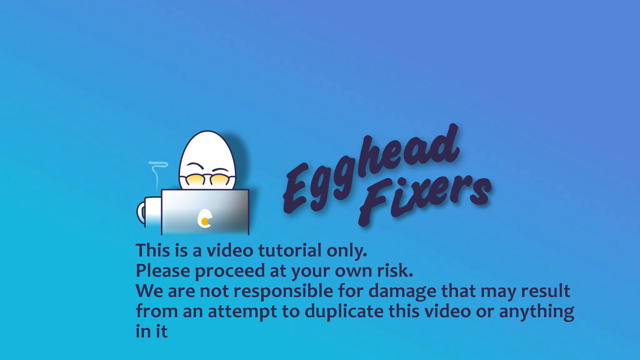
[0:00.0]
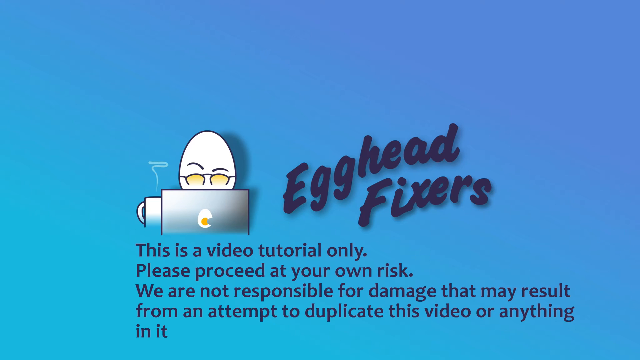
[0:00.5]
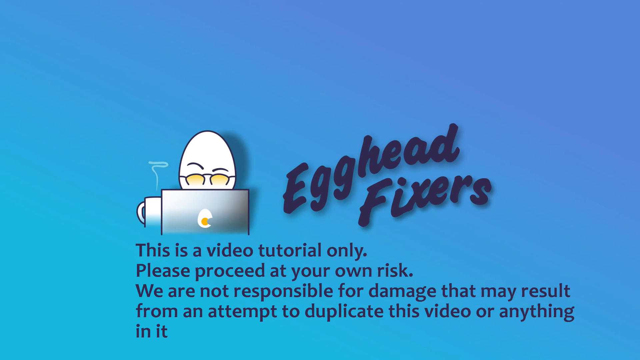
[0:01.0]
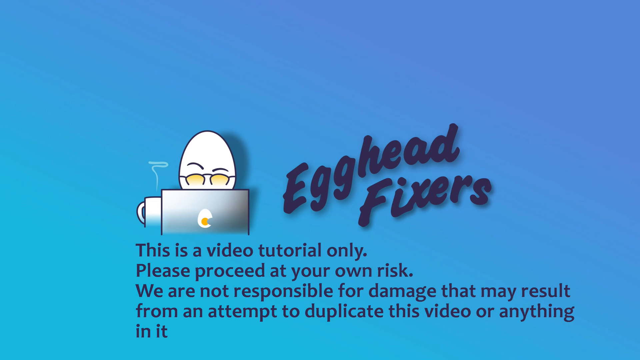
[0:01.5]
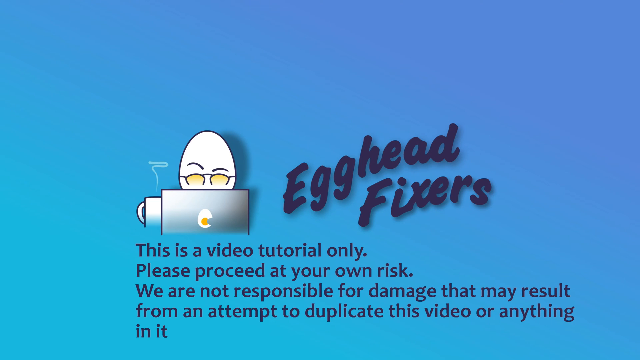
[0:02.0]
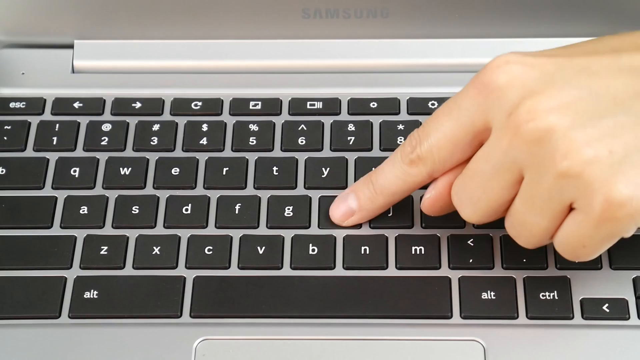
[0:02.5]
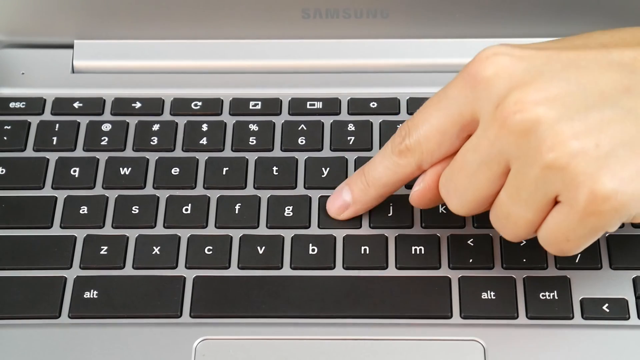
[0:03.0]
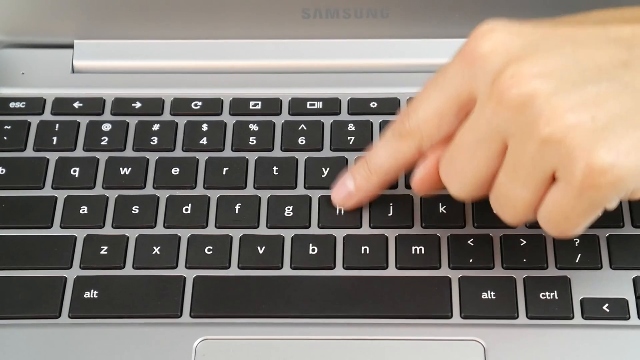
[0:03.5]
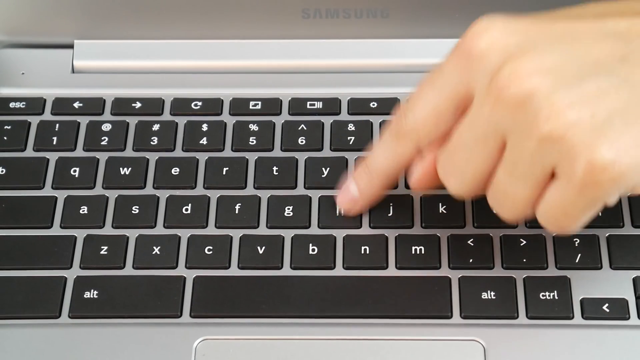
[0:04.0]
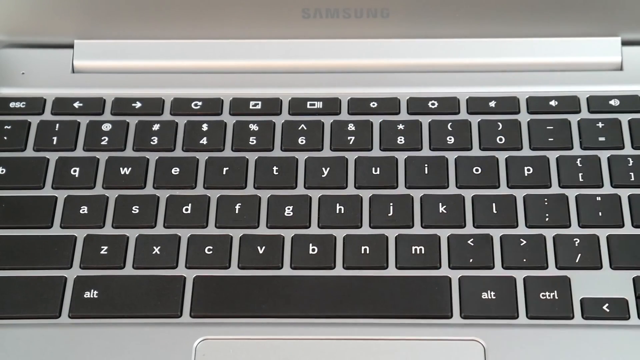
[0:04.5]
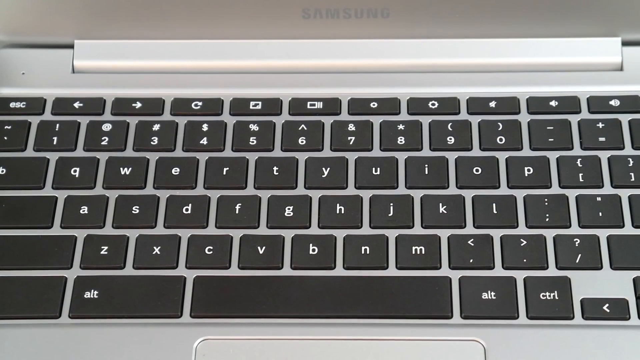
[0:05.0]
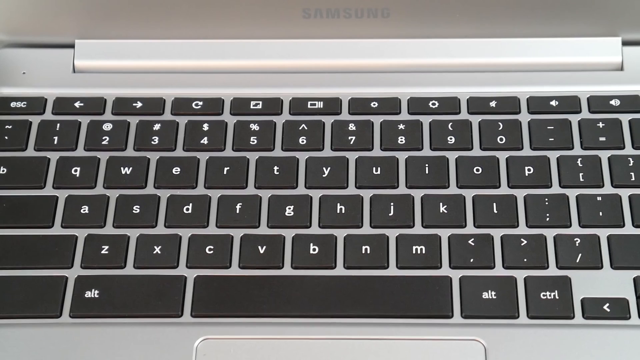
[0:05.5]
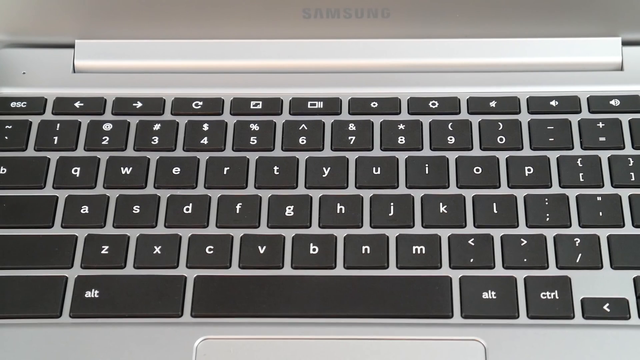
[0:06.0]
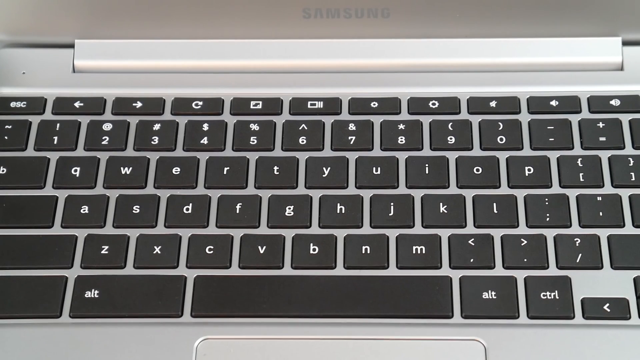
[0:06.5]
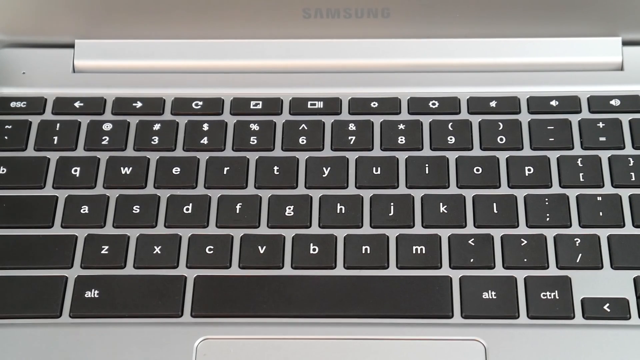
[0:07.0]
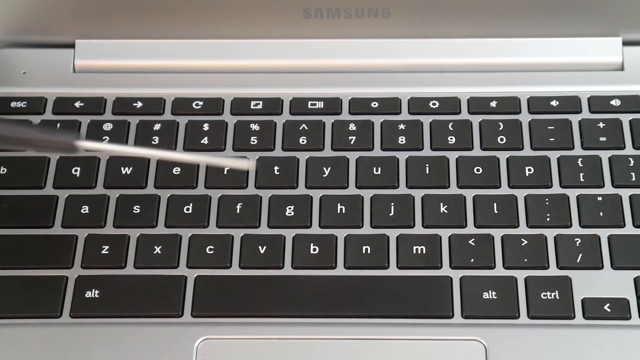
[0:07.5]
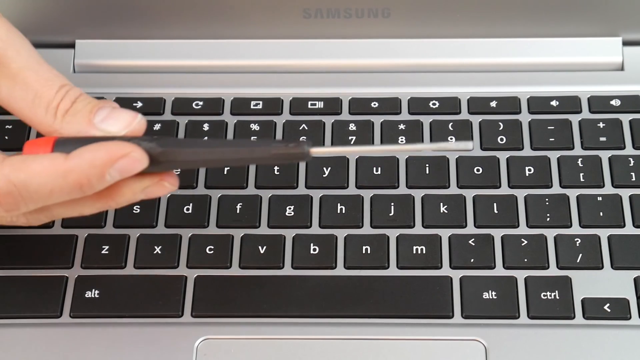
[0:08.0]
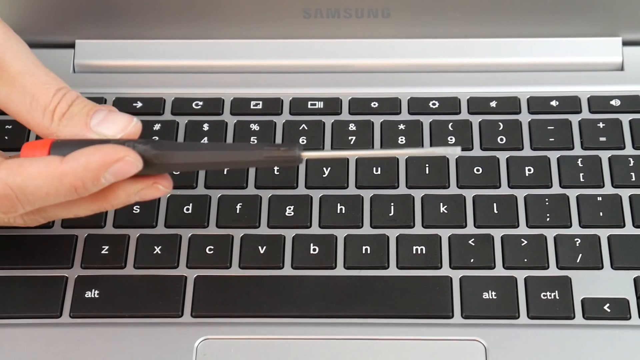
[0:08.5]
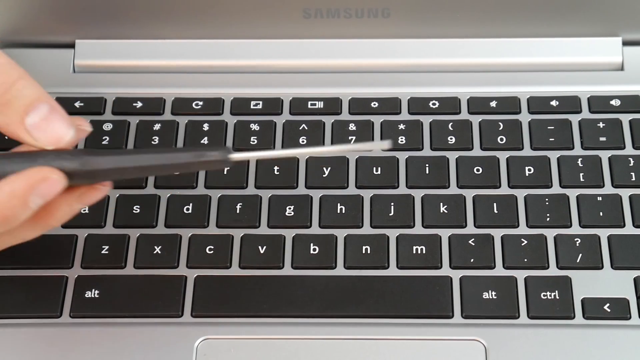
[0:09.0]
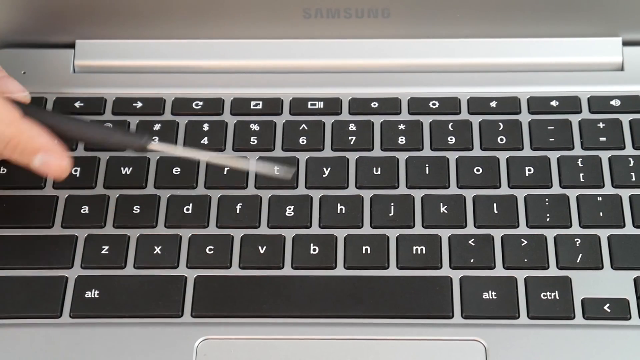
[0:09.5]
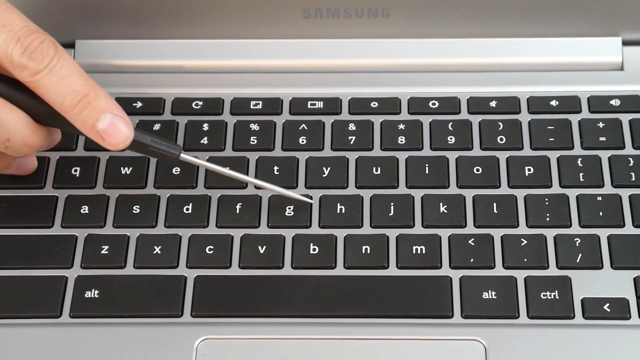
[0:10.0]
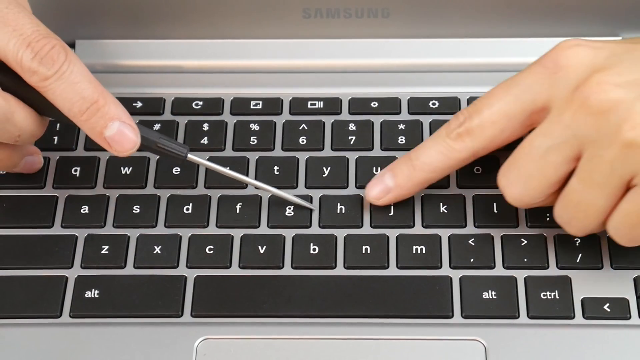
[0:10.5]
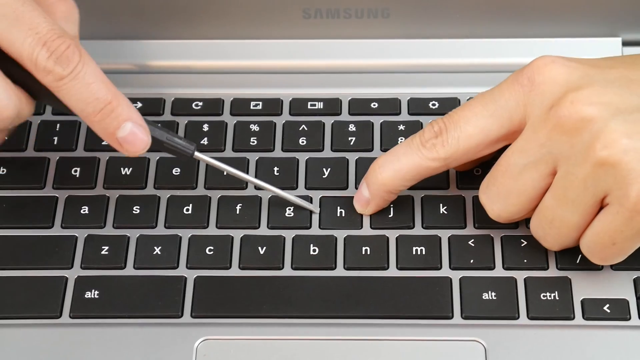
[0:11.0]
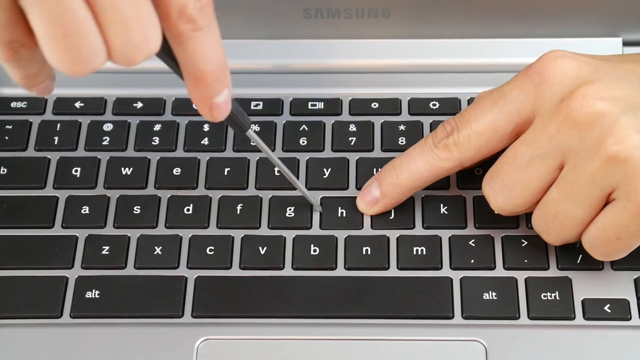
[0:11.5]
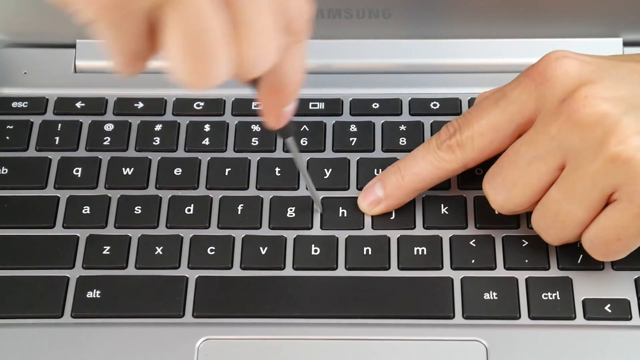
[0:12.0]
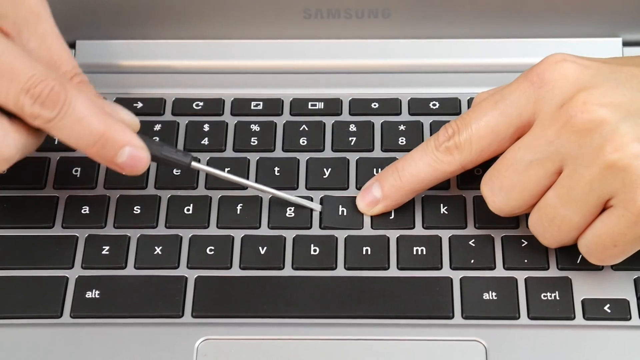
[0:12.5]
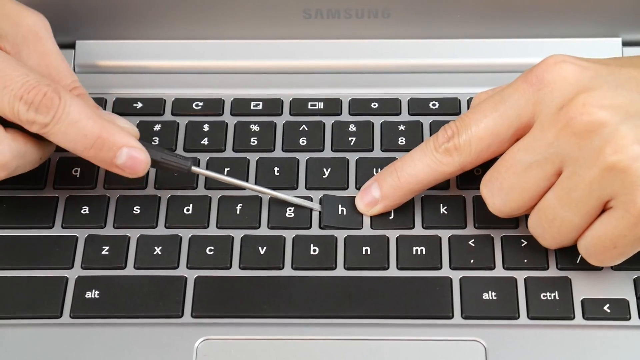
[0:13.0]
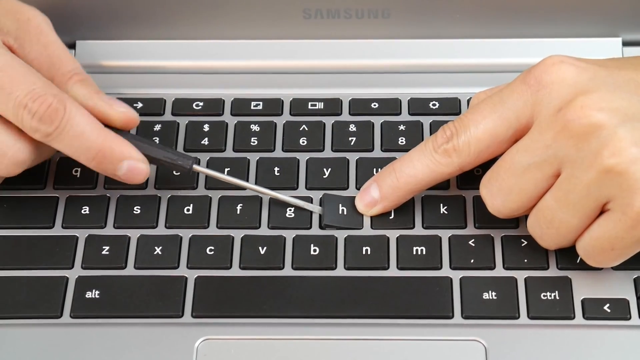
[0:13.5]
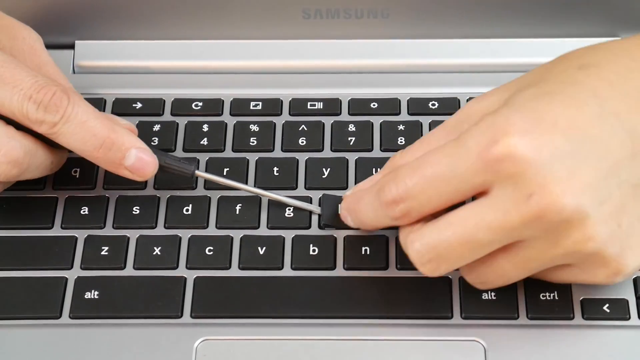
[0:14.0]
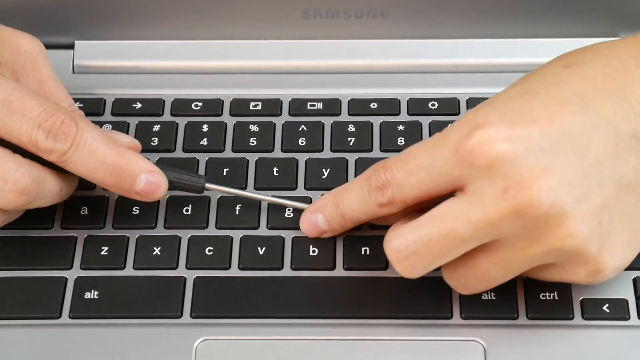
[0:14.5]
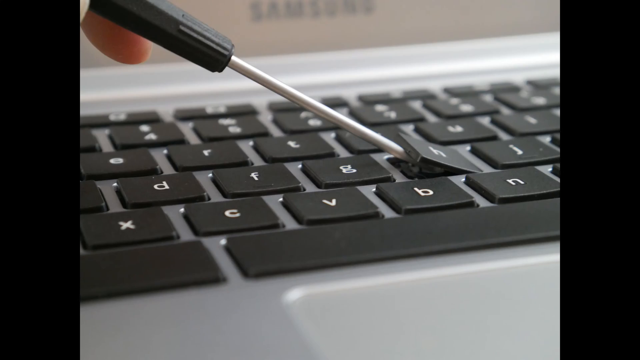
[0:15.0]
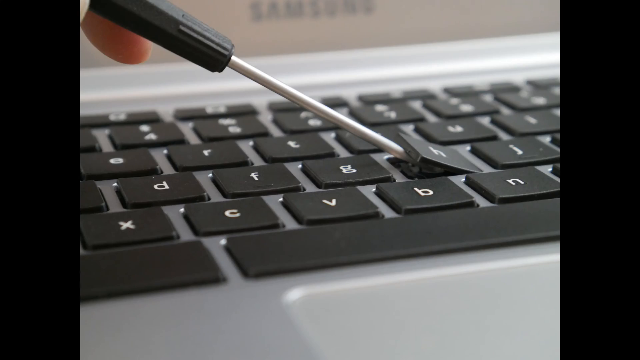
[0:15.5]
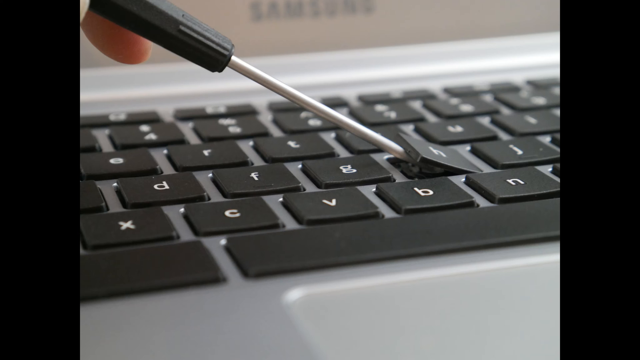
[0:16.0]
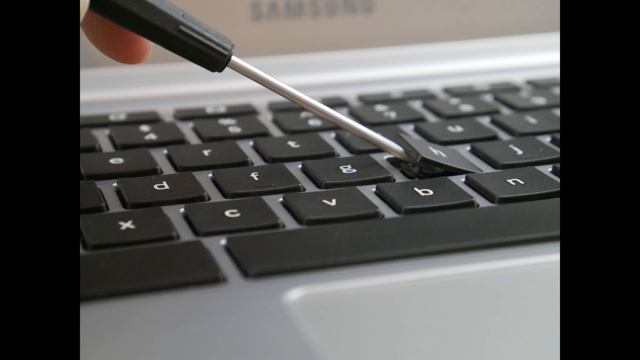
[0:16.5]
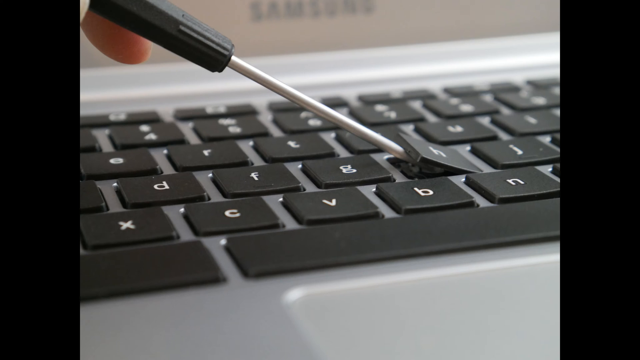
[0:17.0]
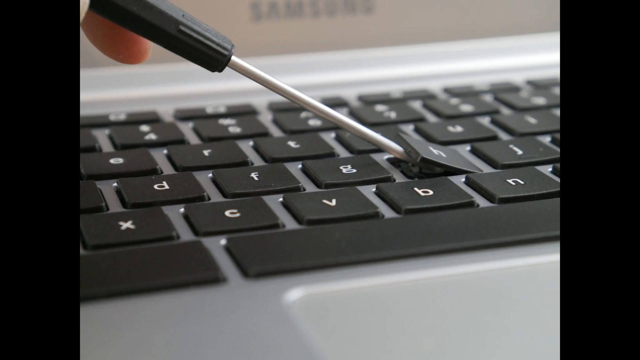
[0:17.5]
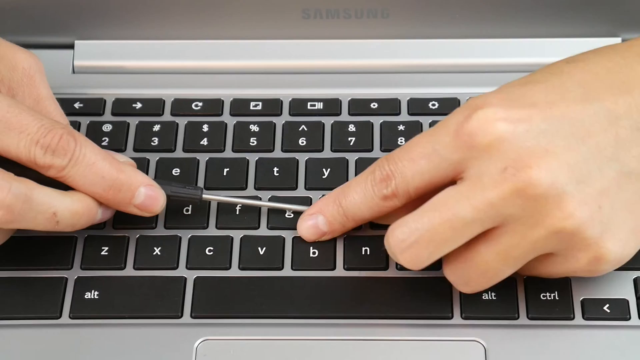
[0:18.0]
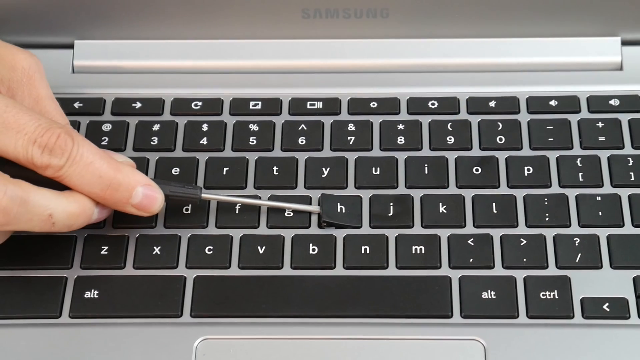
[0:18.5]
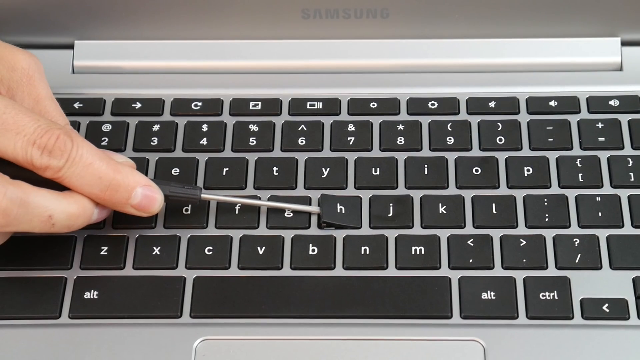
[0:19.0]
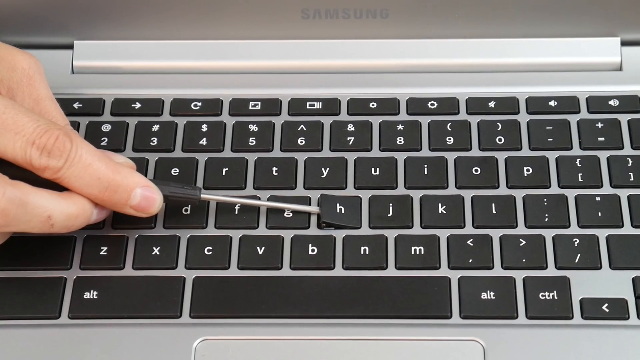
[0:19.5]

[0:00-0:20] The video opens on a light blue background with dark blue text in the center reading "egghead fixers." To the left is a little cartoon-style egg wearing yellow glasses, with visible eyebrows, looking at a laptop beside what looks to be a cup of coffee with a little smoke coming out. Underneath, blue text reads "this is a video tutorial only. Please proceed at your own risk. We are not responsible for damage that may result from an attempt to duplicate this video." This graphic stays on screen for a few seconds. Then there is a close-up directly over a laptop keyboard, and a finger comes in and presses the H key several times before the hand leaves. A hand then comes in from the left side of the screen holding a very small tool with a black handle that looks to be a screwdriver. He brings his other hand in, holds down the H key with his pointer finger, and places the little screwdriver on the inside notch, trying to get underneath the key and lift it up. The video pauses on the apparently very small flathead screwdriver getting underneath the key and pushing it up. He holds the key pushed up, then brings his hand back down.